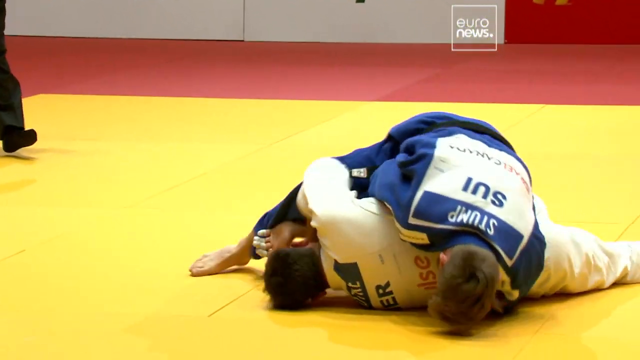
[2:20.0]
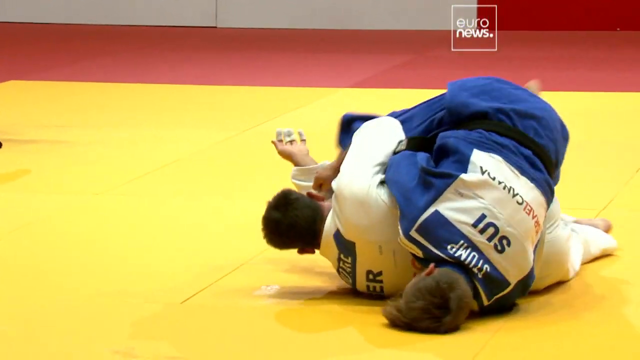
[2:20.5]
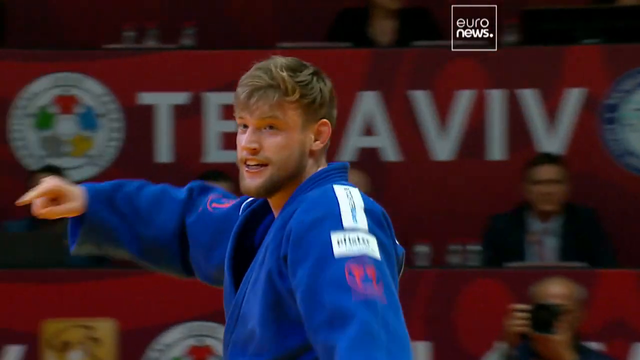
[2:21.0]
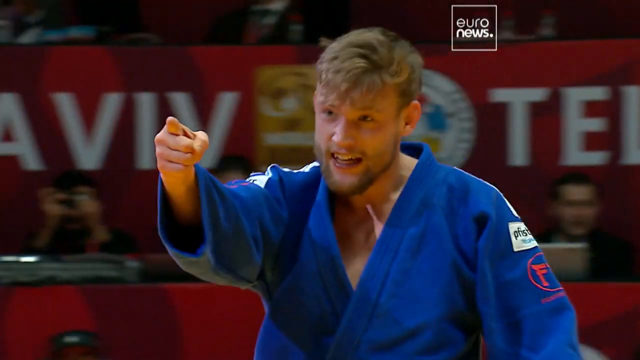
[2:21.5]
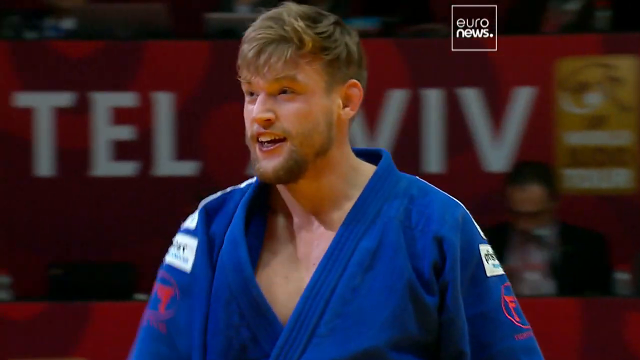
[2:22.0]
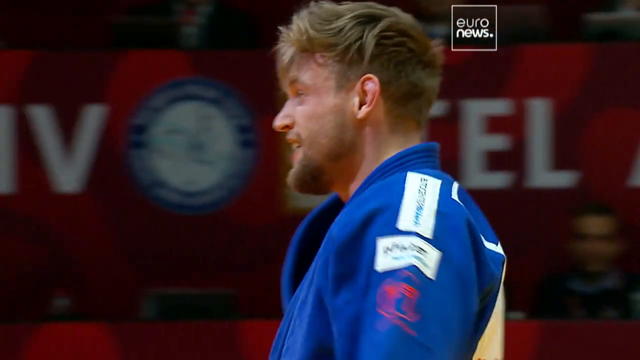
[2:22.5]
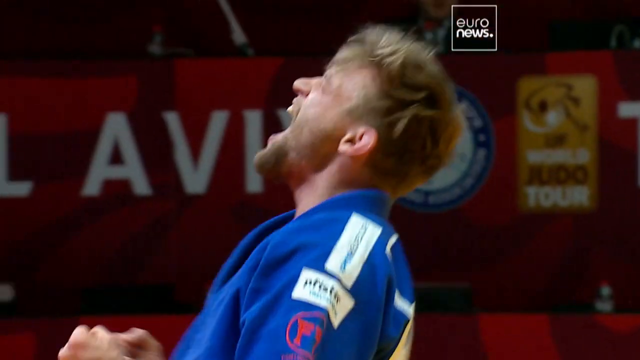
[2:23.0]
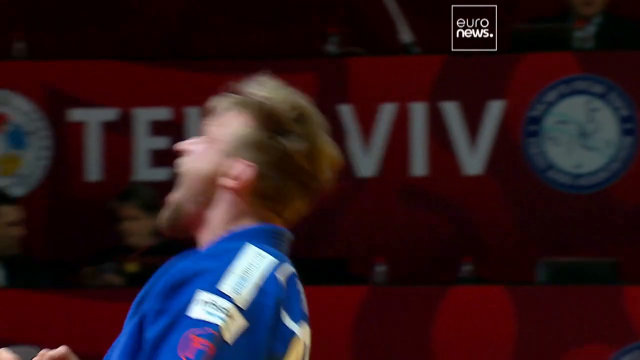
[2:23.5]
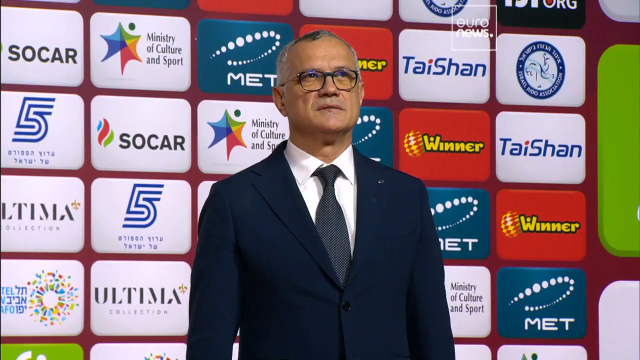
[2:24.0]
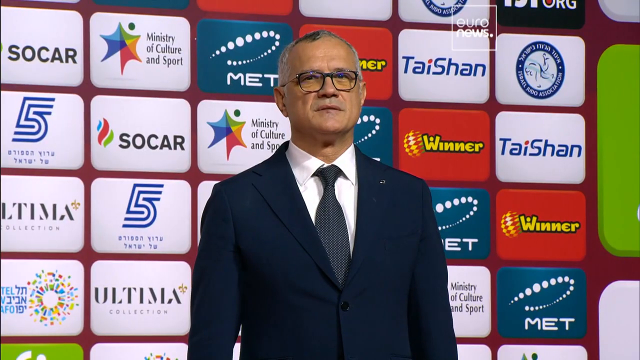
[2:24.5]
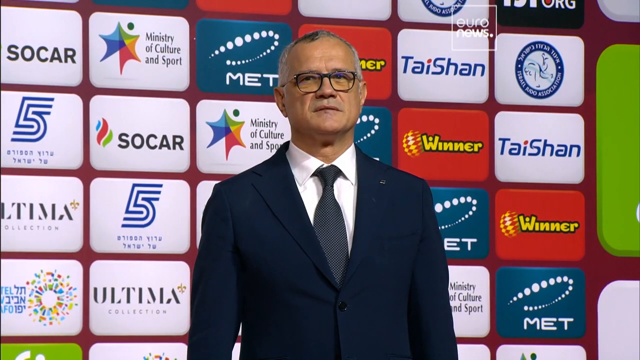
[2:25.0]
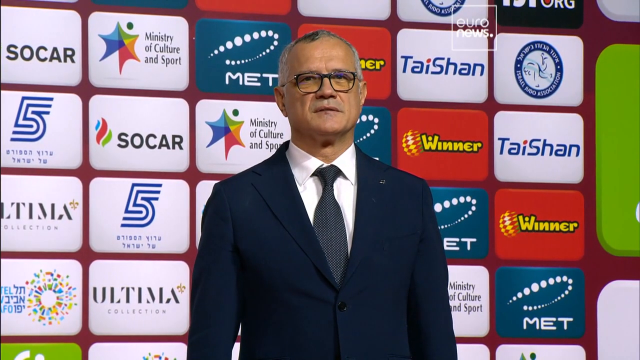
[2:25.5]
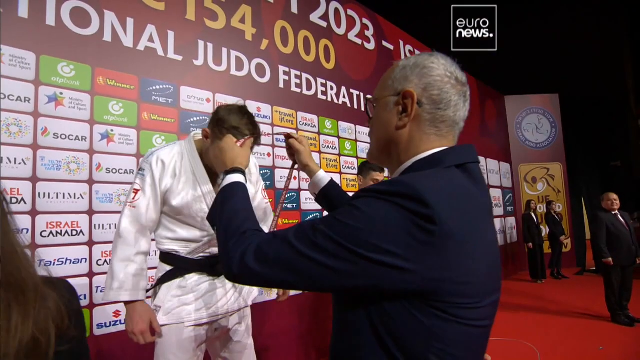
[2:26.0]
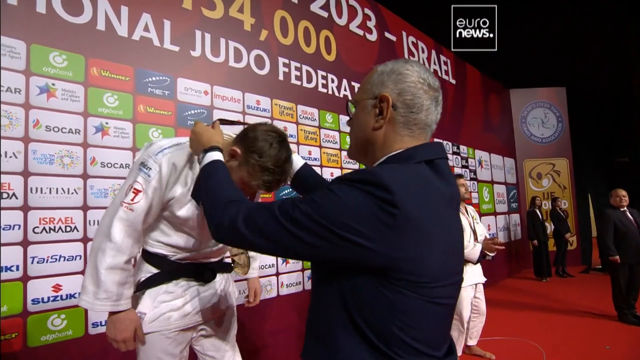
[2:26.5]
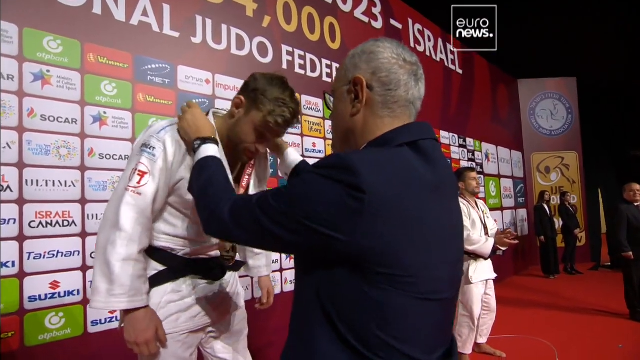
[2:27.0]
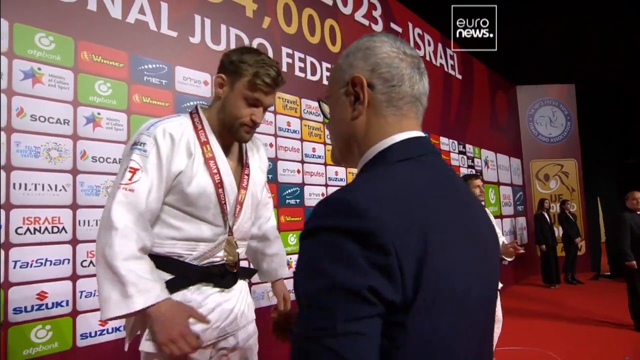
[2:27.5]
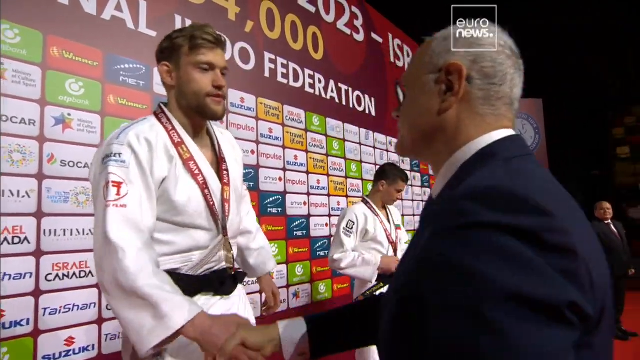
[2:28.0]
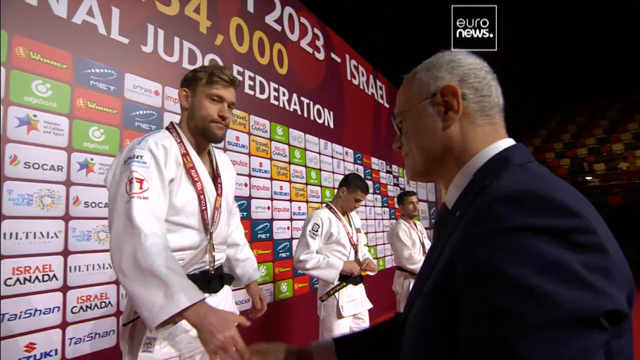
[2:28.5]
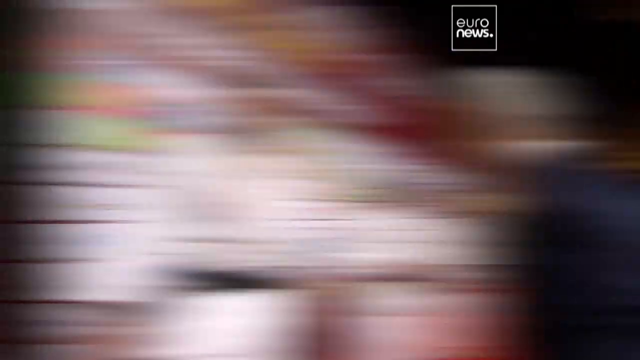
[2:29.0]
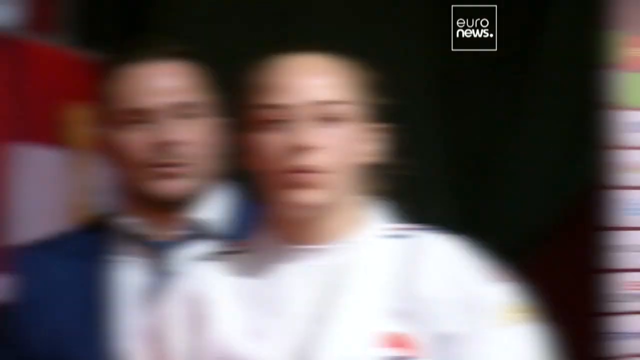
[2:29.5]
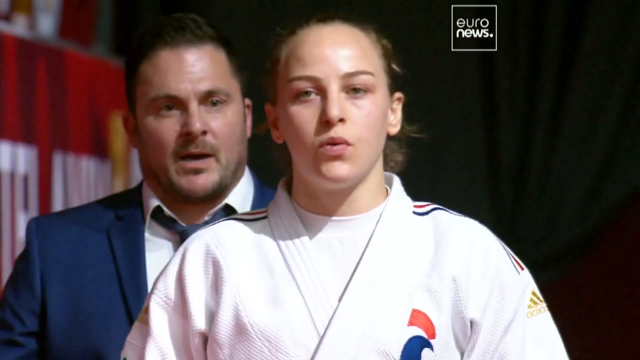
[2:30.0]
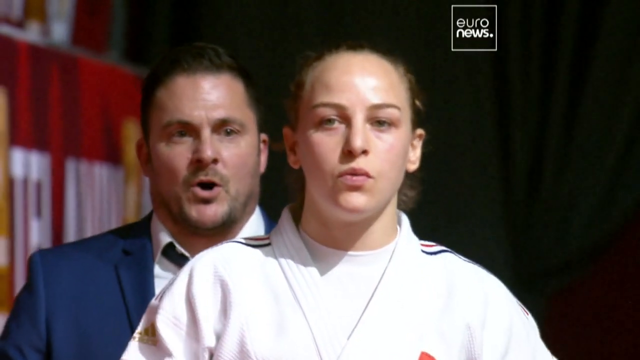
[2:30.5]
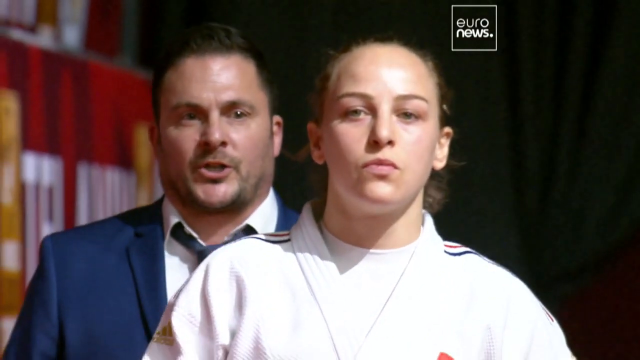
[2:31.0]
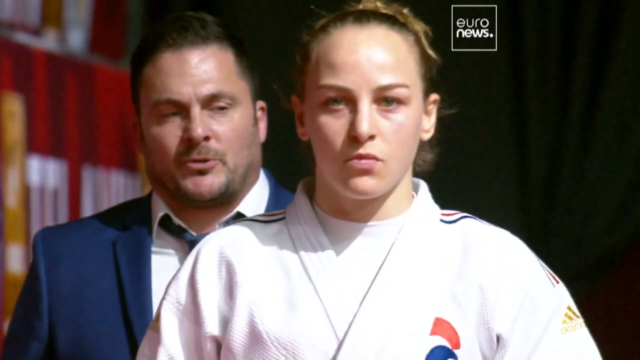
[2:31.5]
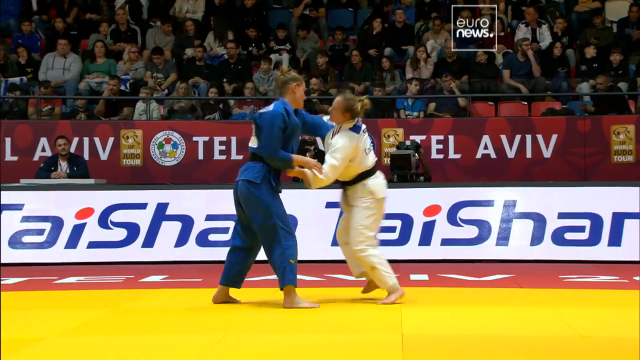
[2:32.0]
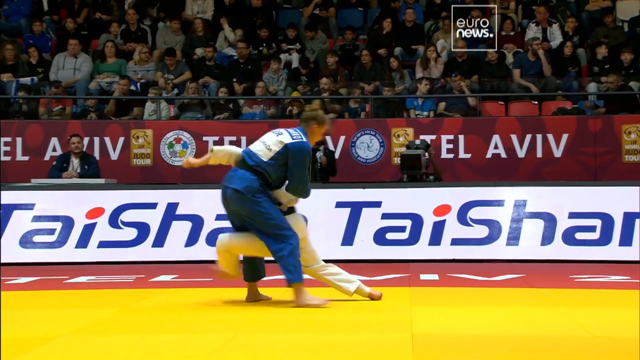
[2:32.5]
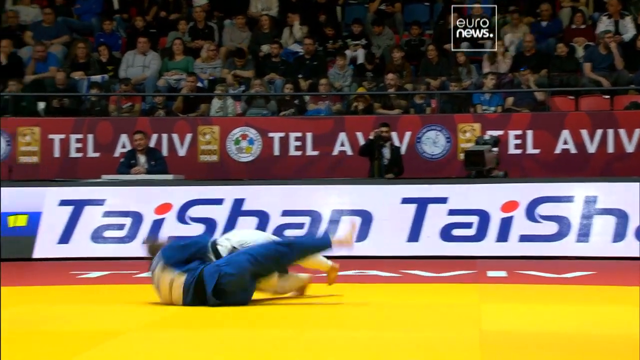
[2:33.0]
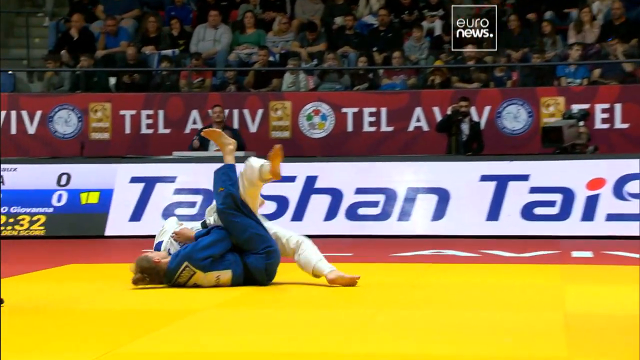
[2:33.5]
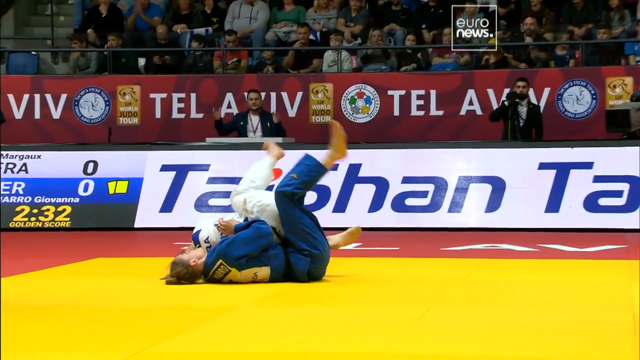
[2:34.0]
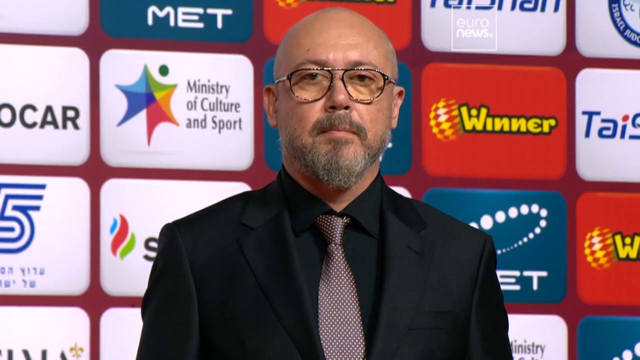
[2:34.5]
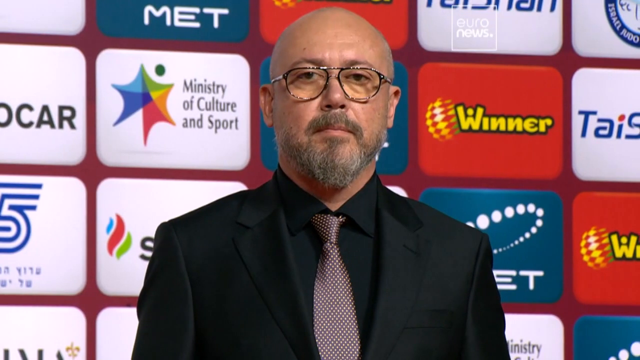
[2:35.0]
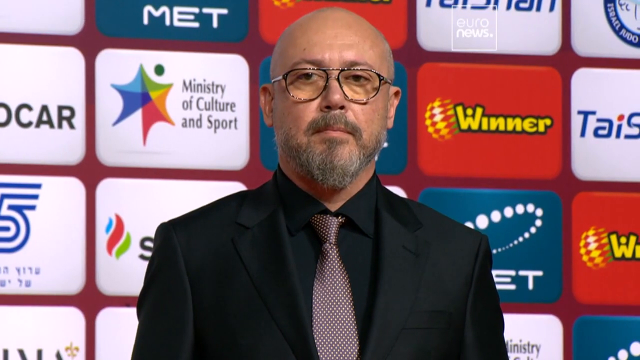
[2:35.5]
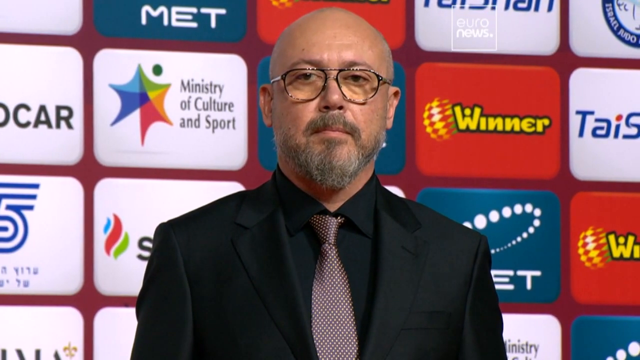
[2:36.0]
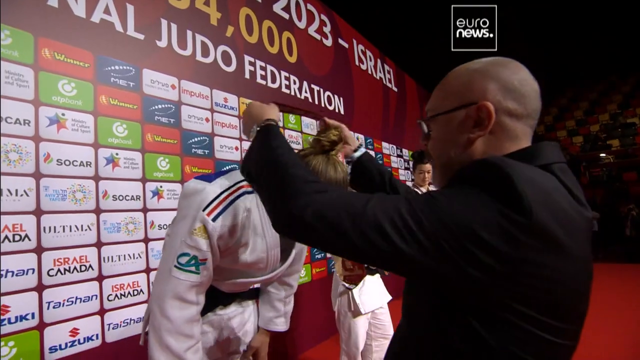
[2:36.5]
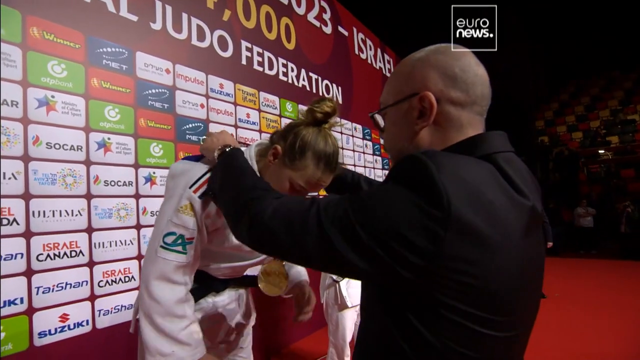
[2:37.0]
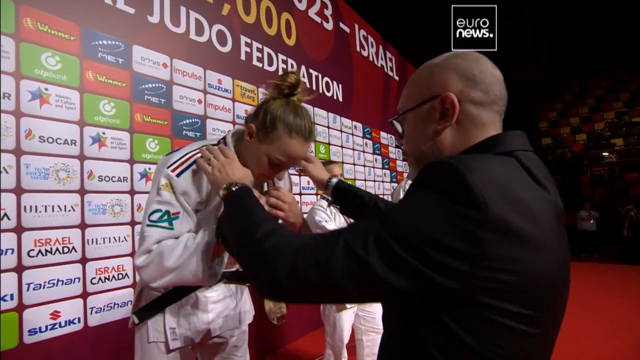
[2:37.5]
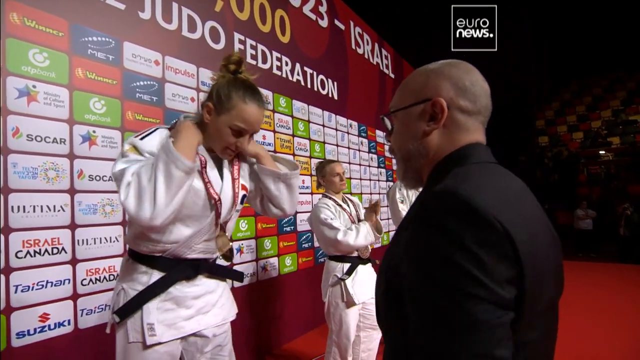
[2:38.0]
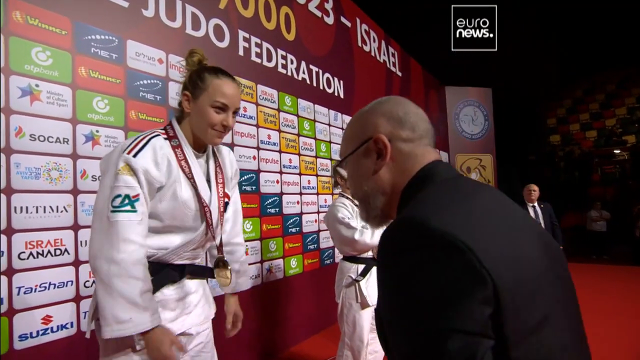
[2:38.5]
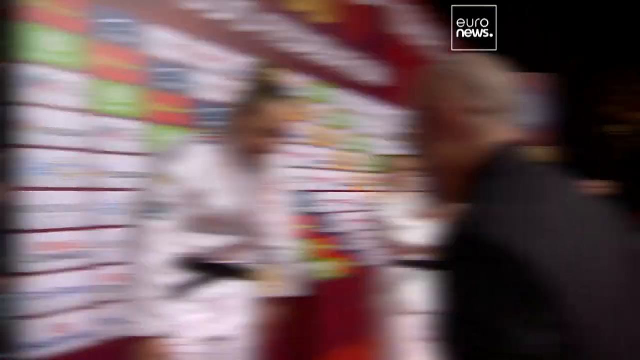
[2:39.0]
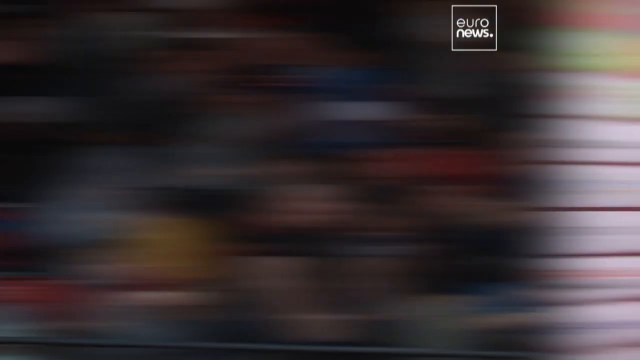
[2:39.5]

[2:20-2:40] An athlete in a blue uniform, apparently the Swiss athlete, has "SUI" on his back. A man with short white hair and glasses, in what looks like a dark blue-black suit, stands in front of an advertising board, then puts a medal around the neck of an athlete who appears to be the Swiss athlete. A white board behind them reads "2023- Israel" and "Judo Federation". The Swiss athlete appears to be getting a gold medal, and two other judo athletes stand next to him, also with medals. A new female judo athlete walks into the stadium and is then shown fighting an athlete in a blue uniform. A bald man with a gray-brown goatee and glasses, wearing a black suit, black shirt and maroon tie, stands in front of the advertising board, and at the very end he puts a medal around the female athlete's neck.